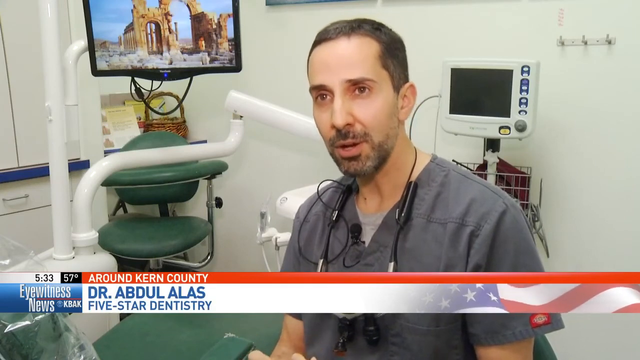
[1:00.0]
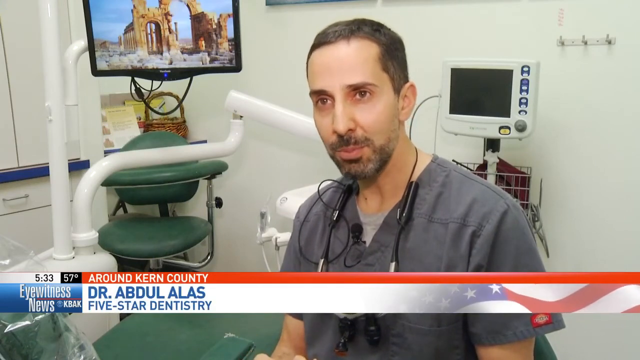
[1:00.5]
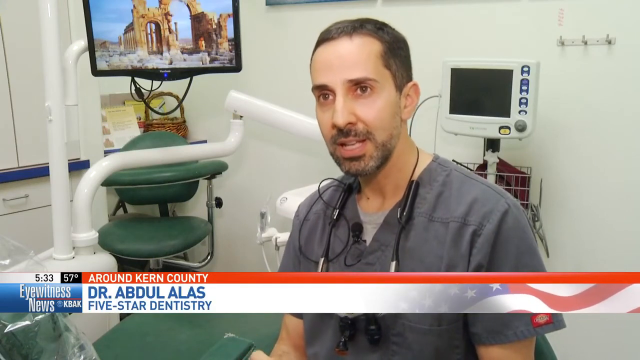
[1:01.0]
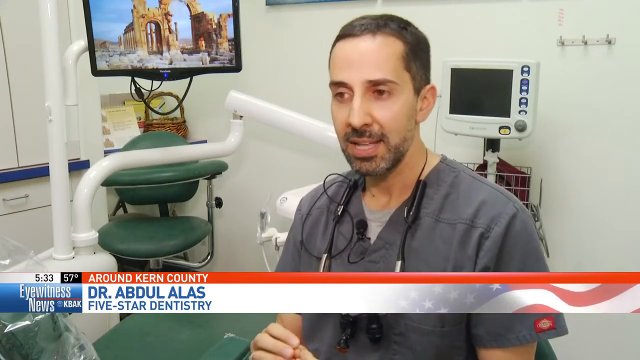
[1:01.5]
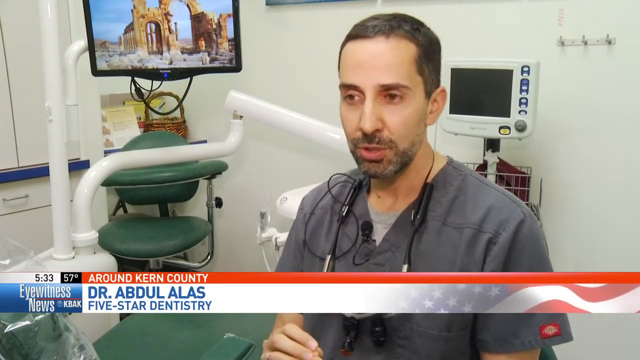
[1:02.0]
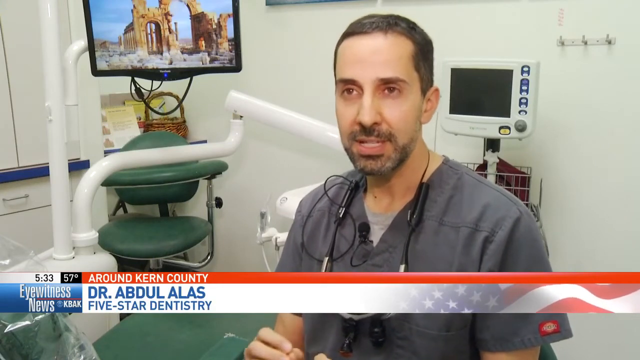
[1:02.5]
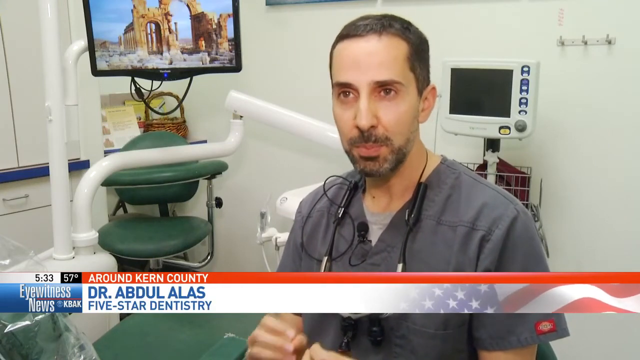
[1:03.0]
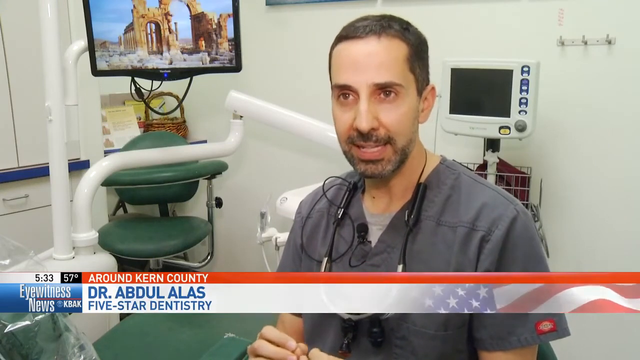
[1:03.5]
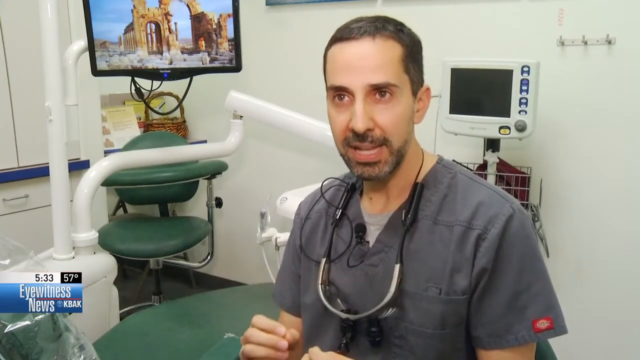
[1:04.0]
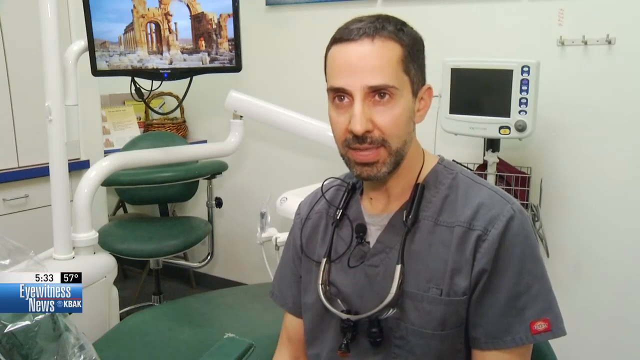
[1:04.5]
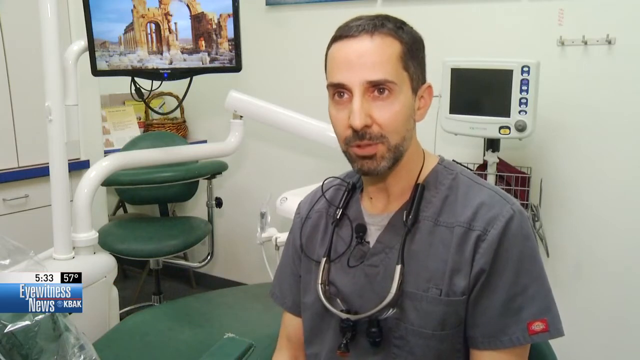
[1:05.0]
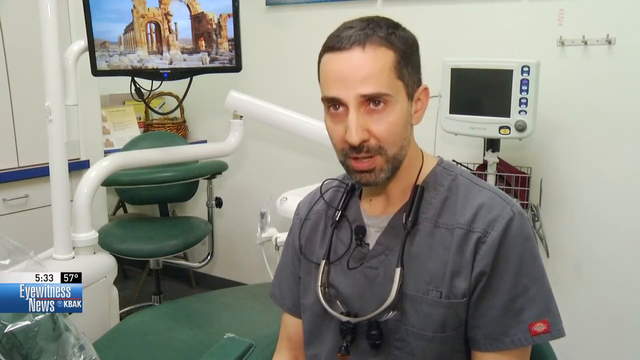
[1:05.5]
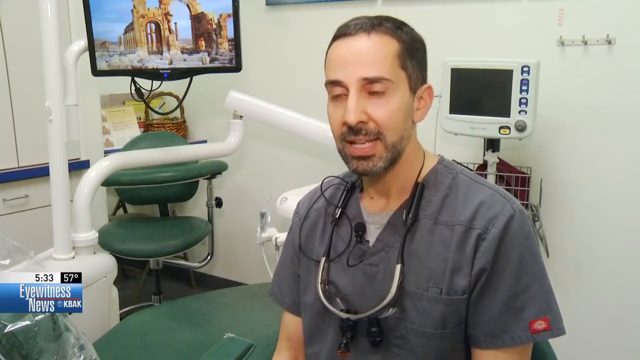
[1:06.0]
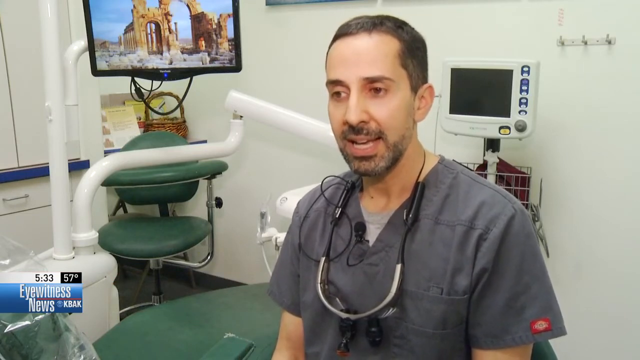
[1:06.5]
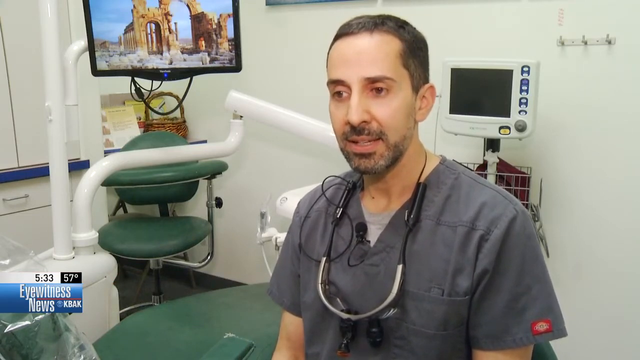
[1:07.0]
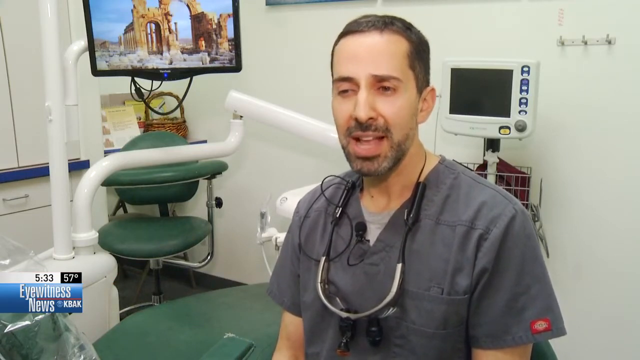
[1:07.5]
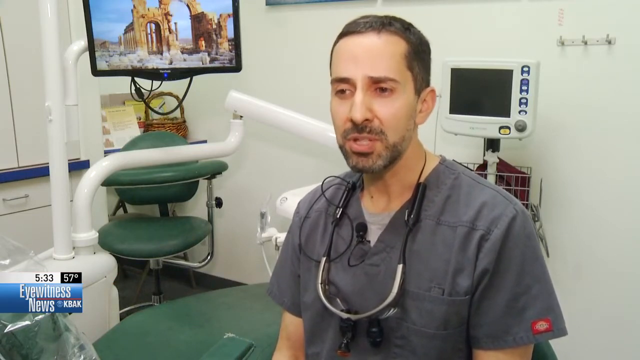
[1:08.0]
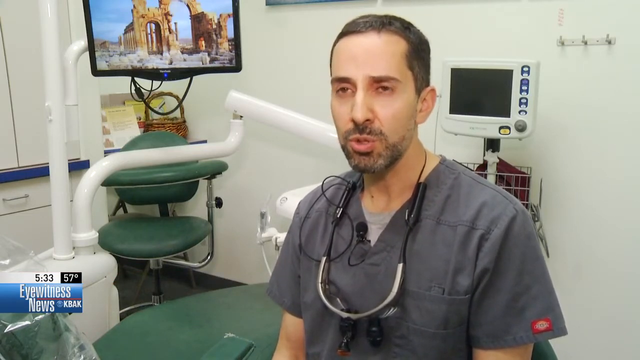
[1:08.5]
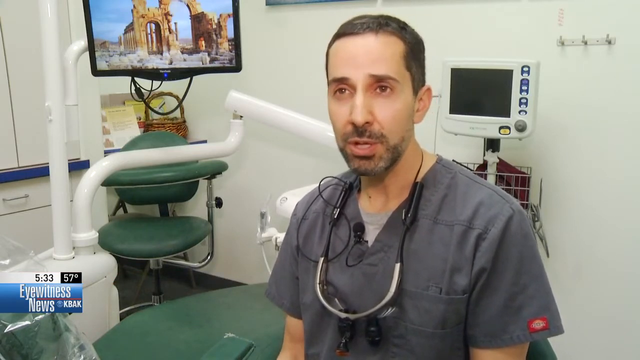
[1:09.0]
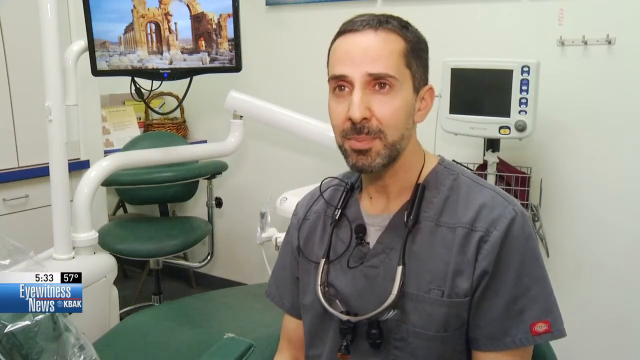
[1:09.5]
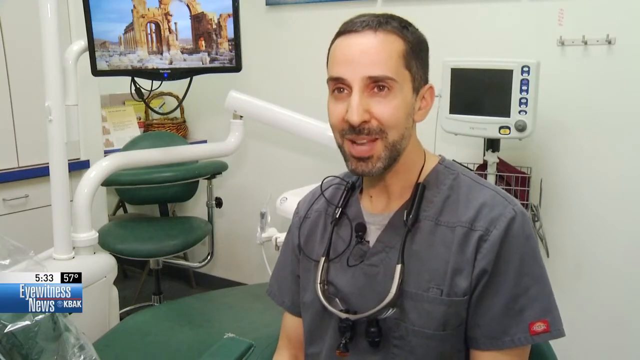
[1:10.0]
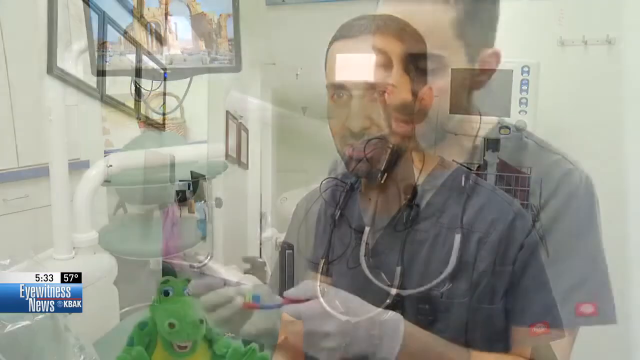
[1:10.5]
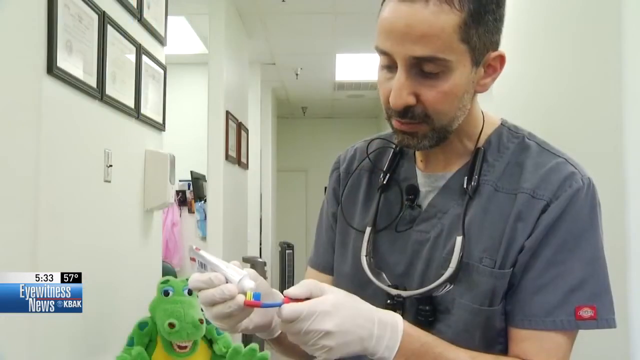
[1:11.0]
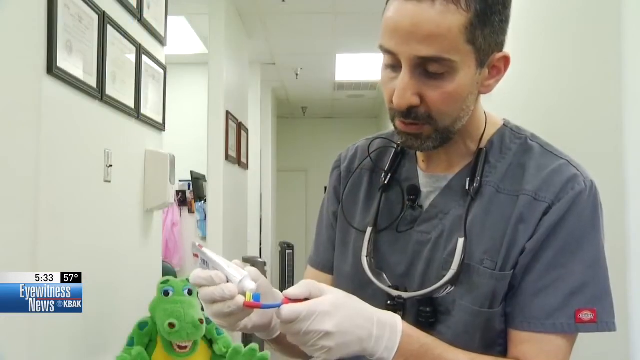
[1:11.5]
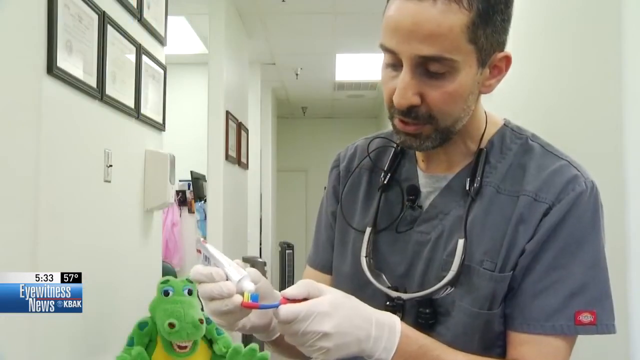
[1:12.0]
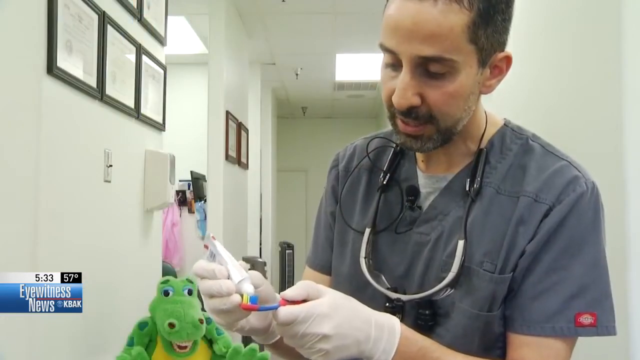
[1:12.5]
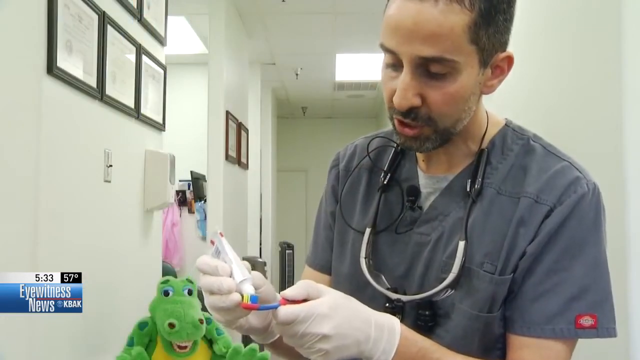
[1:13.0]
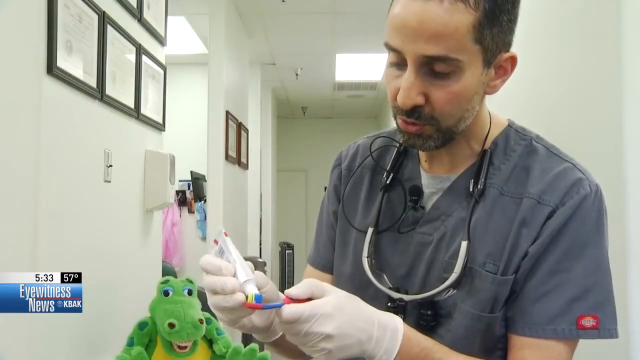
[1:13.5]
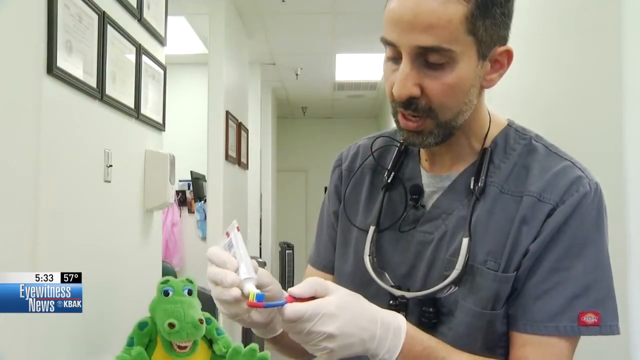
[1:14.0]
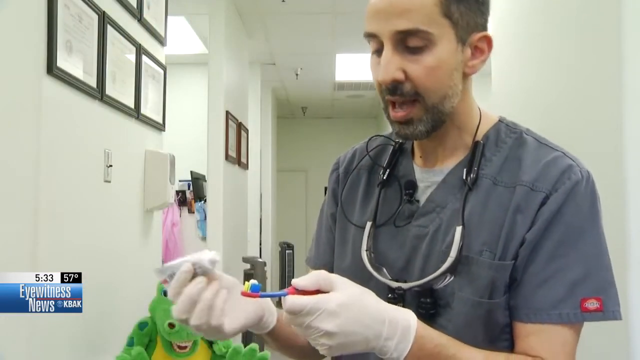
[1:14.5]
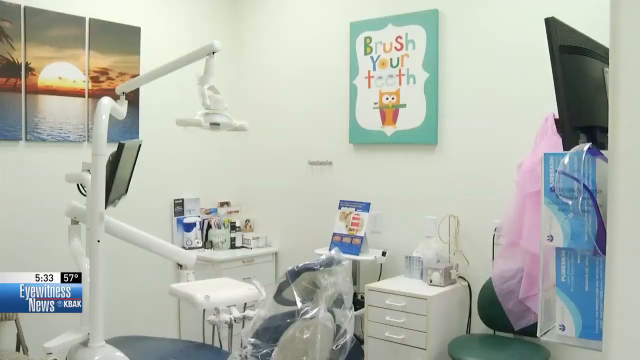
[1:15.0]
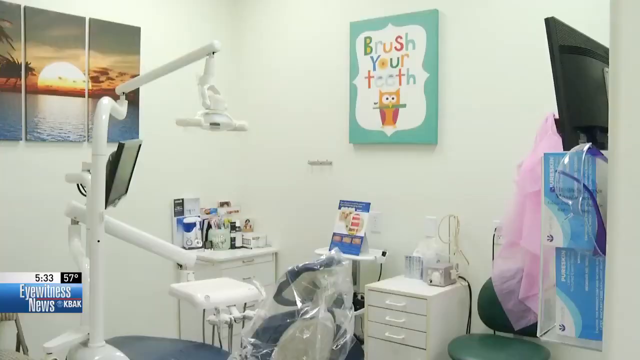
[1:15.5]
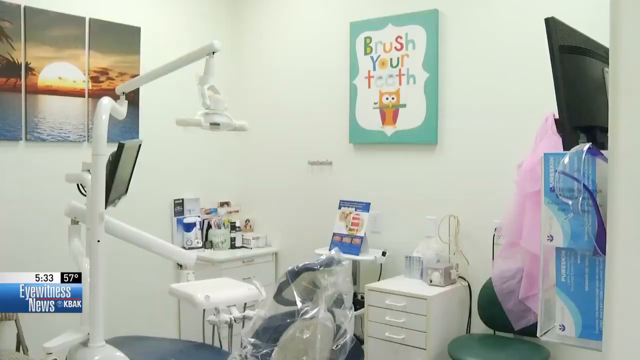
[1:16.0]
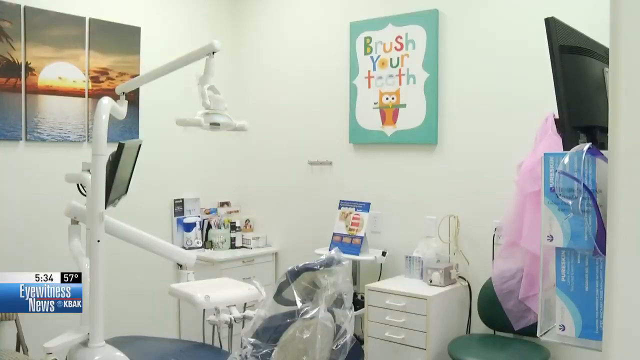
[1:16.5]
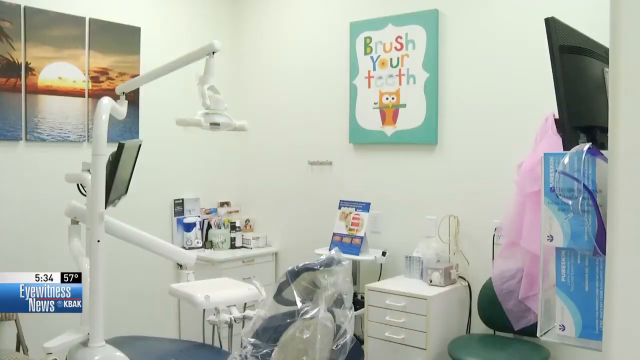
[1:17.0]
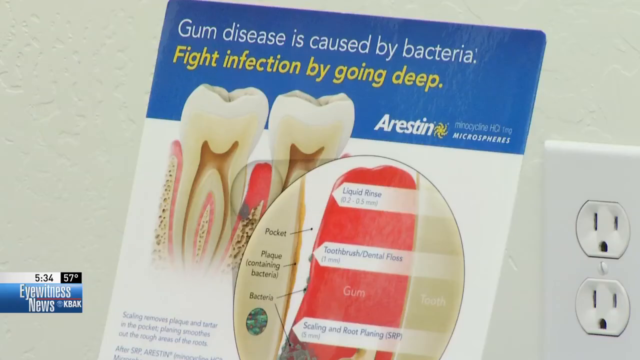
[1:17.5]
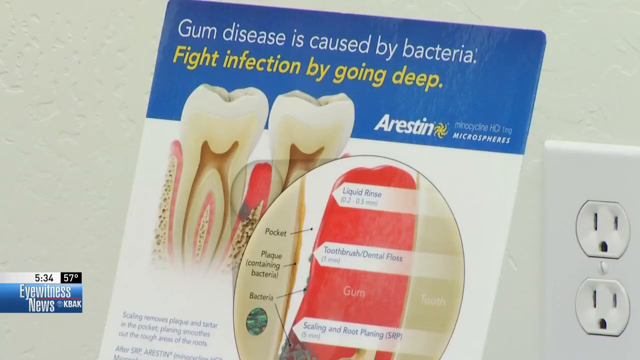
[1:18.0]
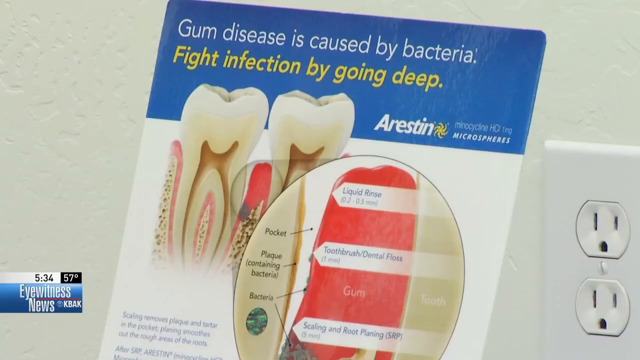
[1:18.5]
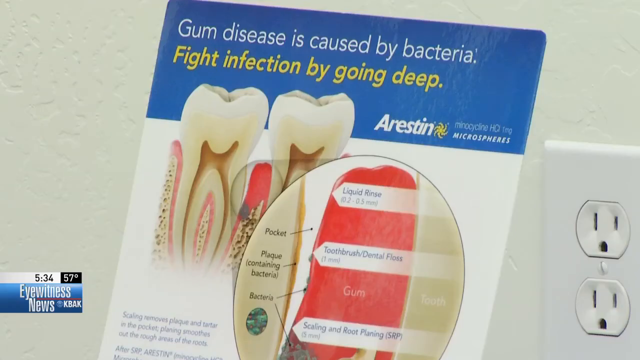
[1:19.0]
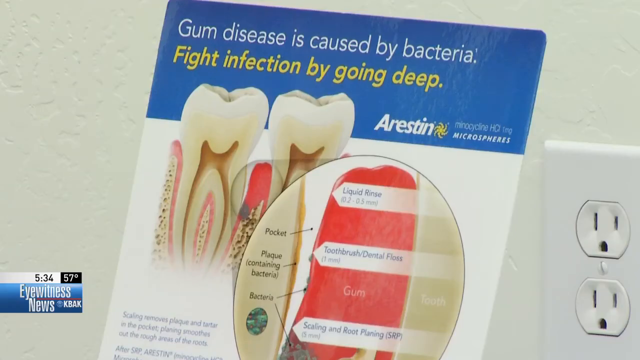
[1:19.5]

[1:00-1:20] A man in a gray shirt with cords around his neck sits slightly right of center, speaking to the camera, his mouth moving as he nods and sways a little with his words. Behind him is a dental office with a chair. In a new view he is standing, seen from the elbows up, wearing two white gloves and holding a toothpaste tube and a toothbrush in front of him with his arms bent at the elbows. His right hand holds the tube angled down with its opening on the toothbrush head, and his left hand pinches the toothbrush around its middle with thumb and forefinger. He uses his left hand to squeeze the tube, then makes a sweeping motion to get the toothpaste fully onto the brush head. Next comes a view of an empty dentist office room, then a sign that says "gum disease is caused by bacteria. Fight infection by going deep." with images of two teeth, a cross-section showing the teeth going into the gums, and a close-up picture of the gum.